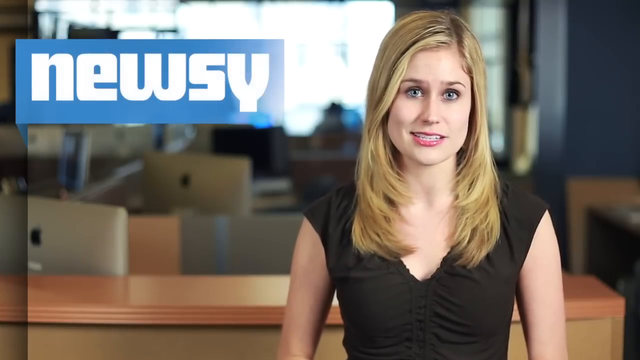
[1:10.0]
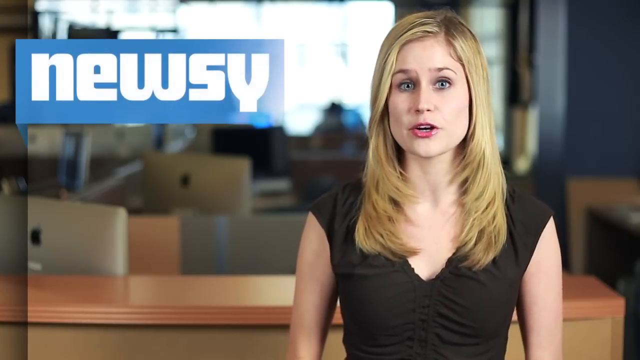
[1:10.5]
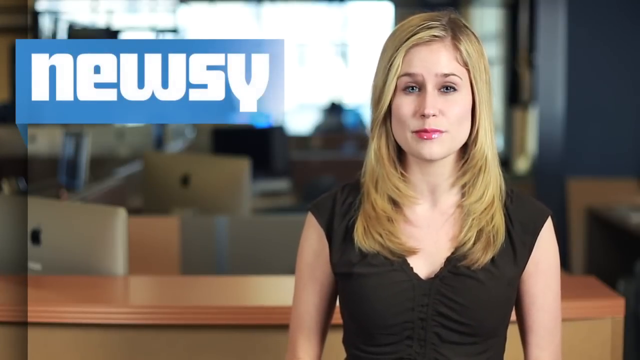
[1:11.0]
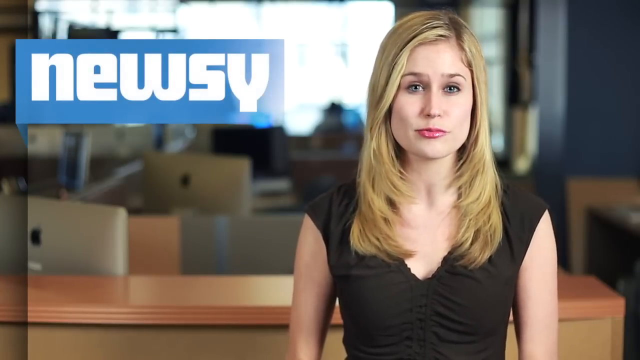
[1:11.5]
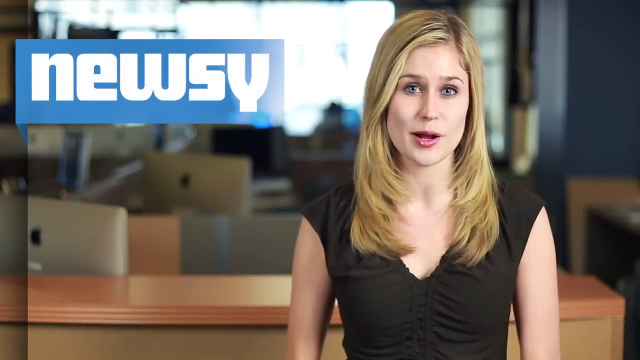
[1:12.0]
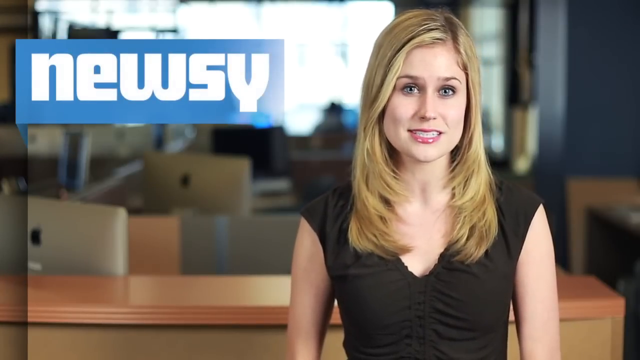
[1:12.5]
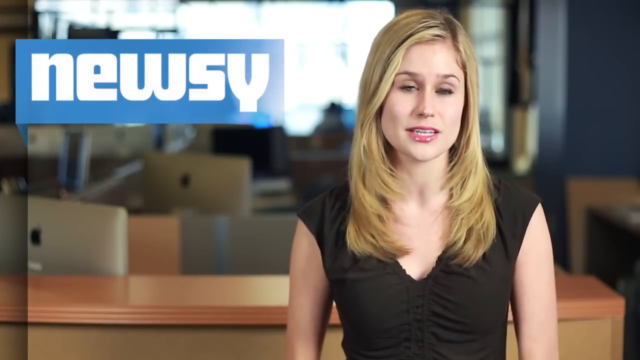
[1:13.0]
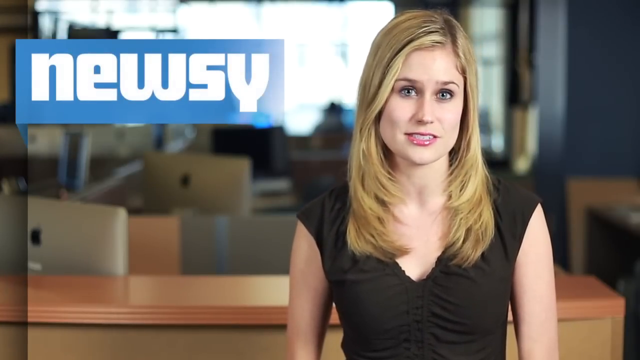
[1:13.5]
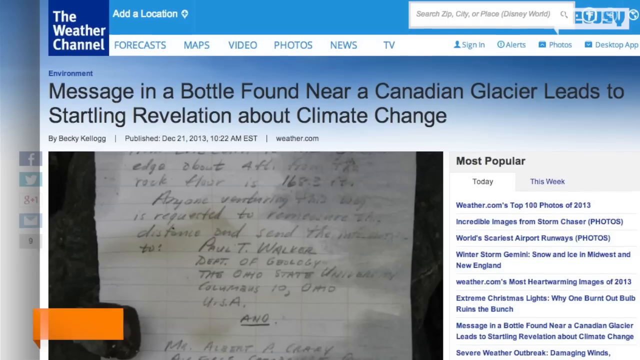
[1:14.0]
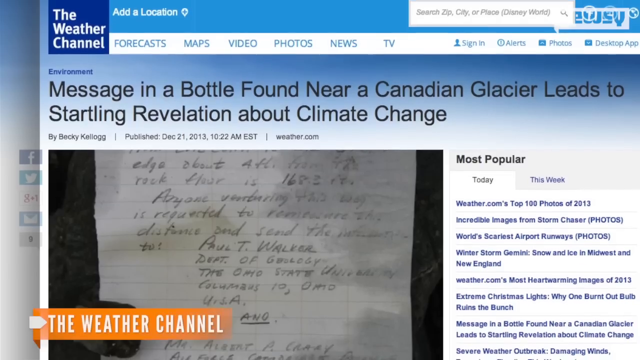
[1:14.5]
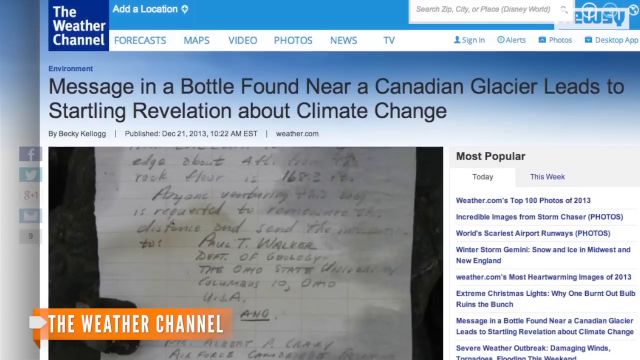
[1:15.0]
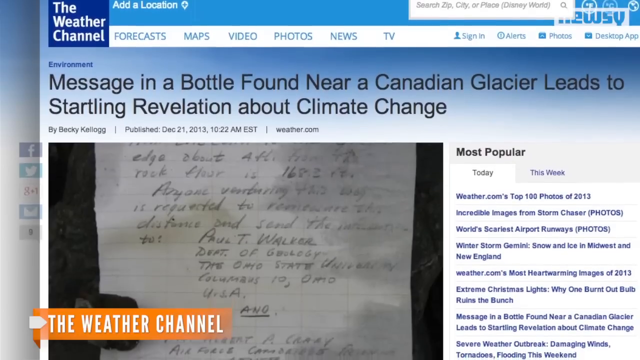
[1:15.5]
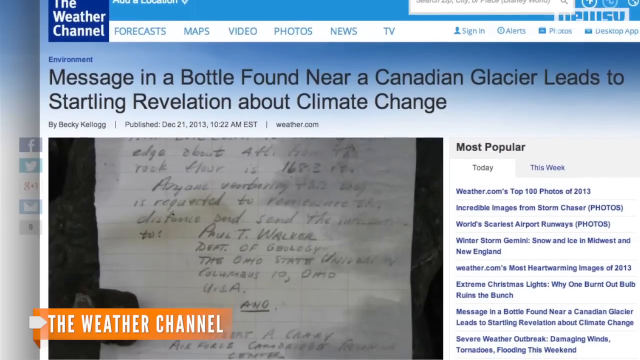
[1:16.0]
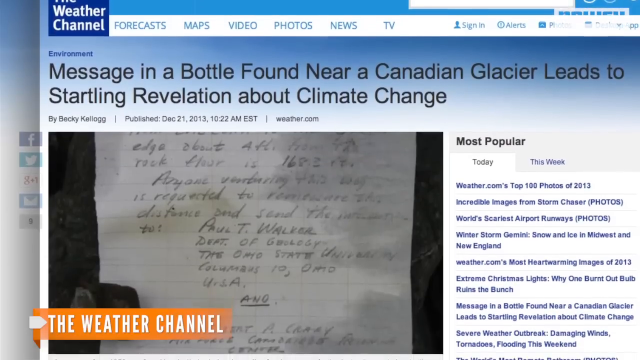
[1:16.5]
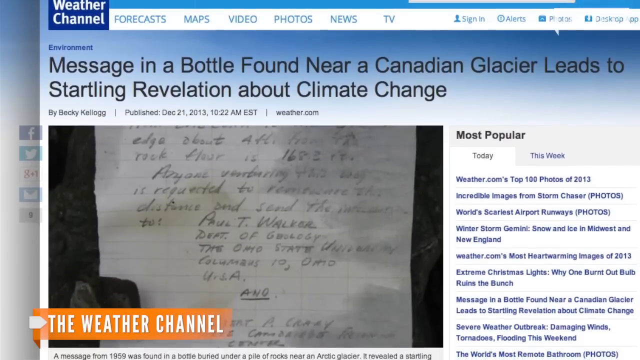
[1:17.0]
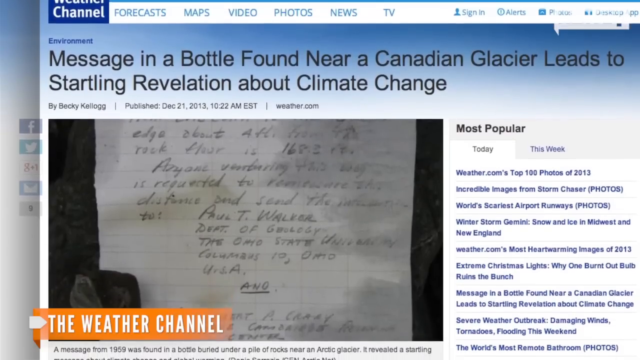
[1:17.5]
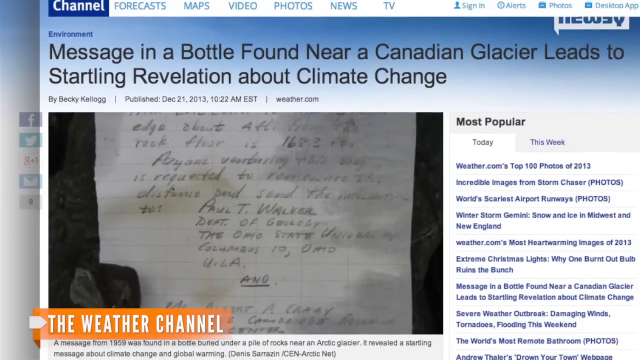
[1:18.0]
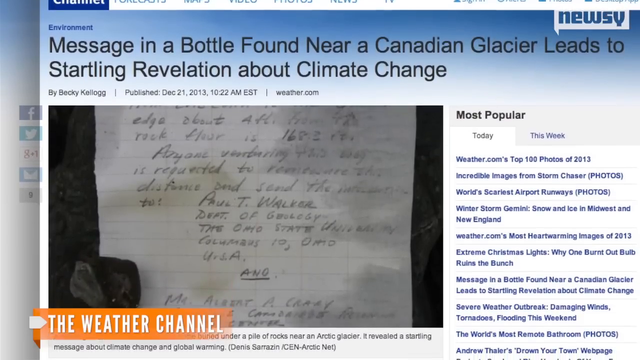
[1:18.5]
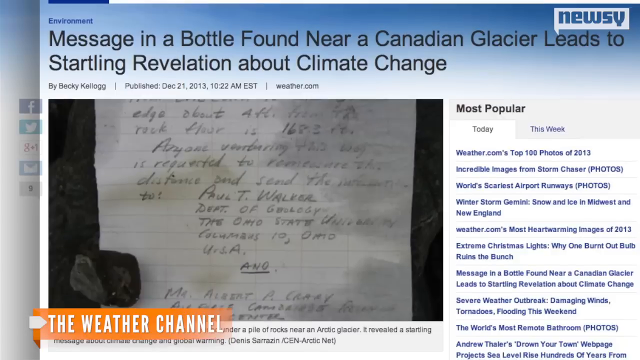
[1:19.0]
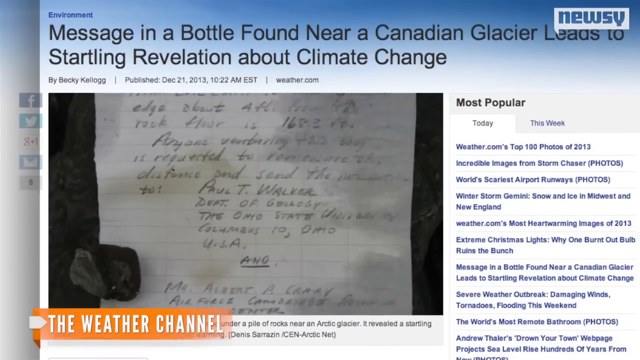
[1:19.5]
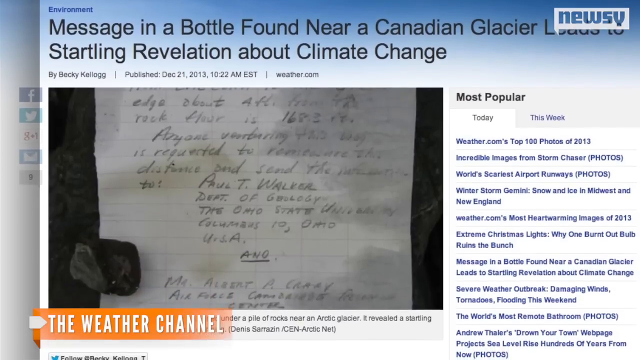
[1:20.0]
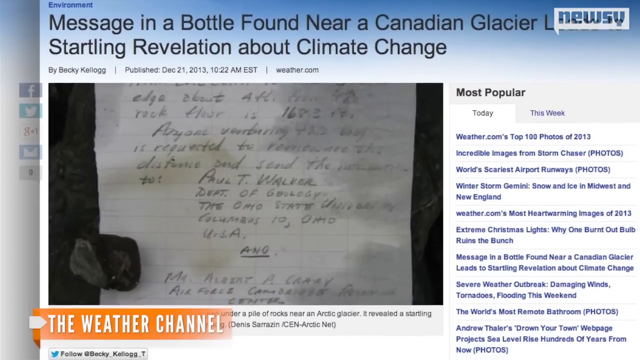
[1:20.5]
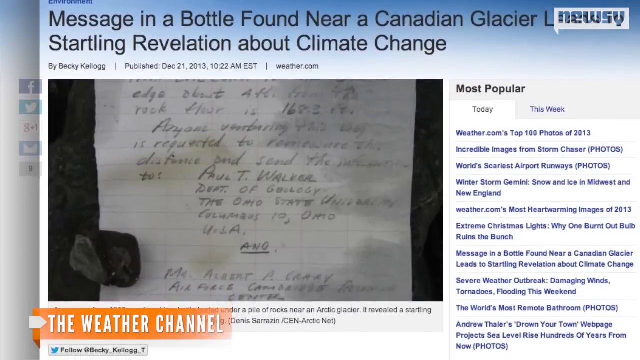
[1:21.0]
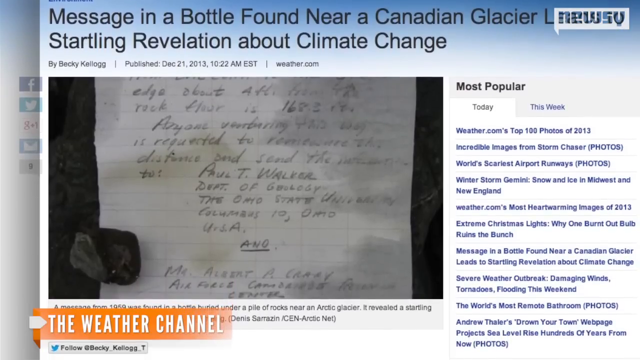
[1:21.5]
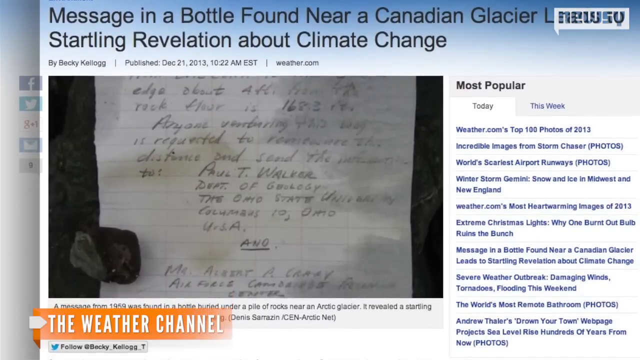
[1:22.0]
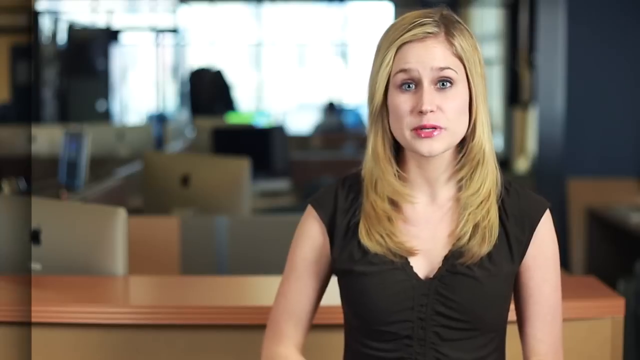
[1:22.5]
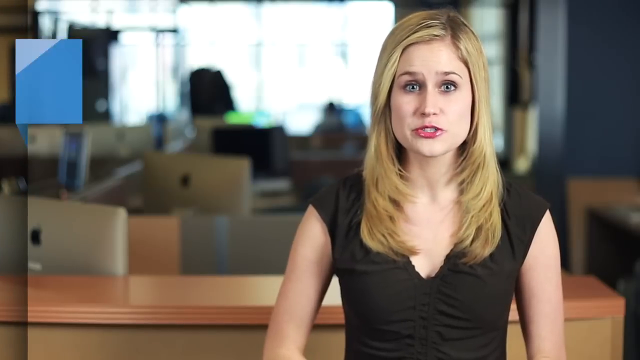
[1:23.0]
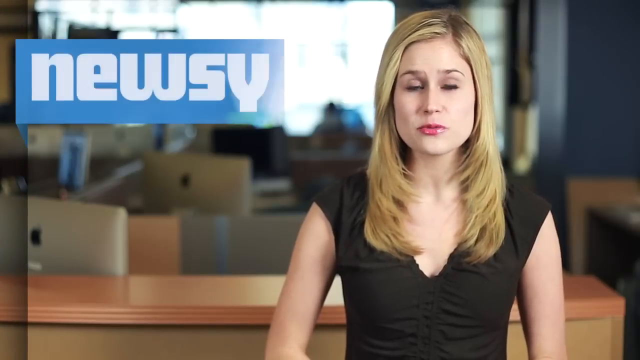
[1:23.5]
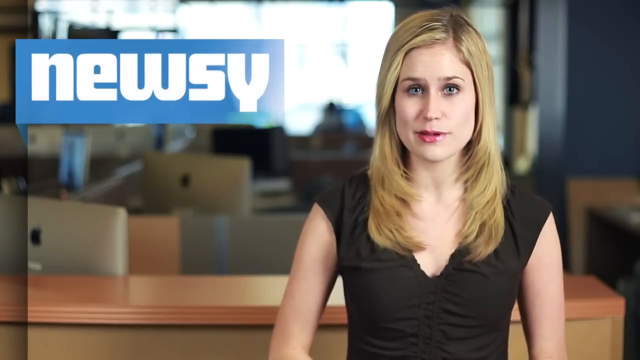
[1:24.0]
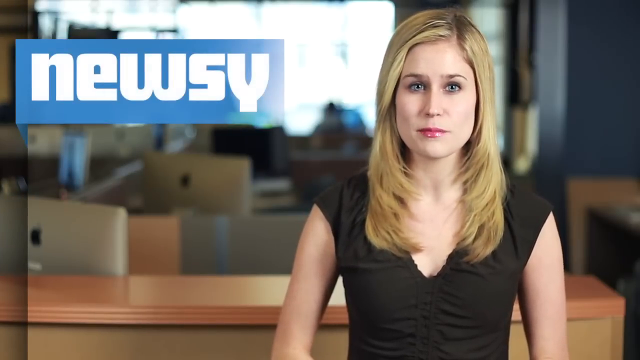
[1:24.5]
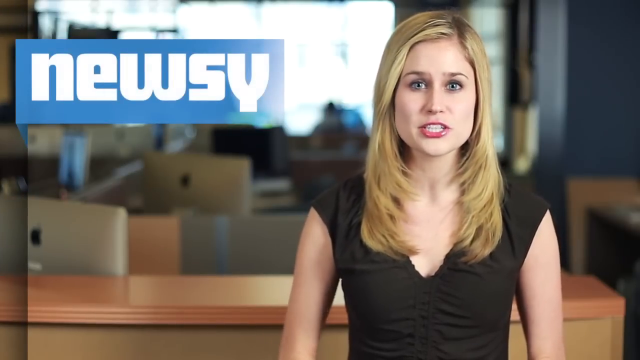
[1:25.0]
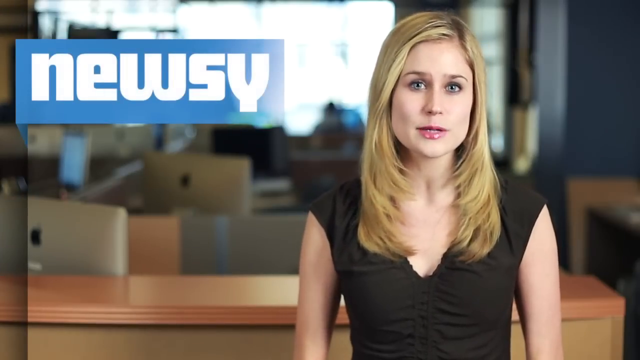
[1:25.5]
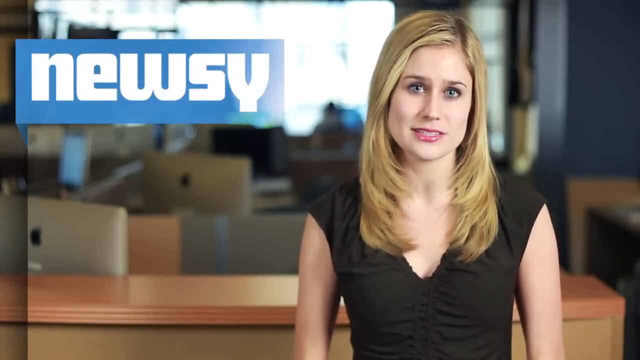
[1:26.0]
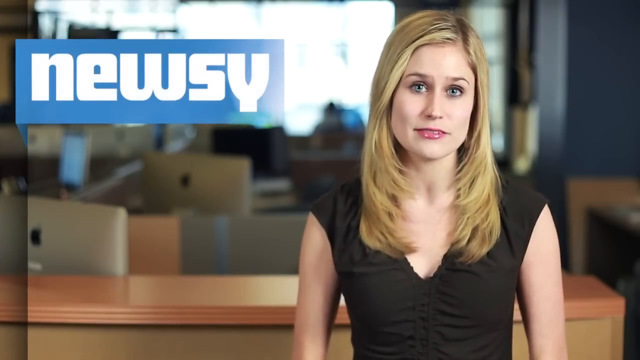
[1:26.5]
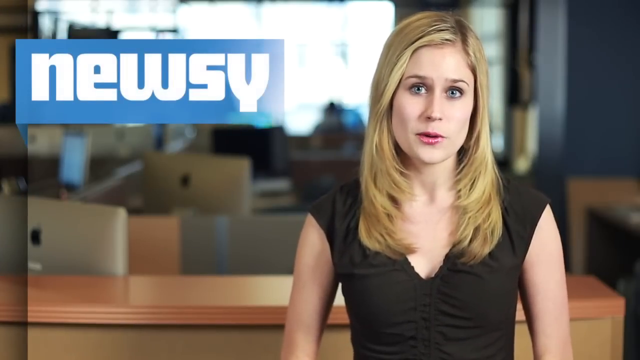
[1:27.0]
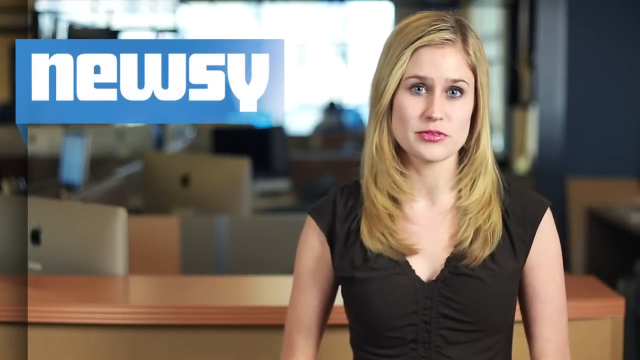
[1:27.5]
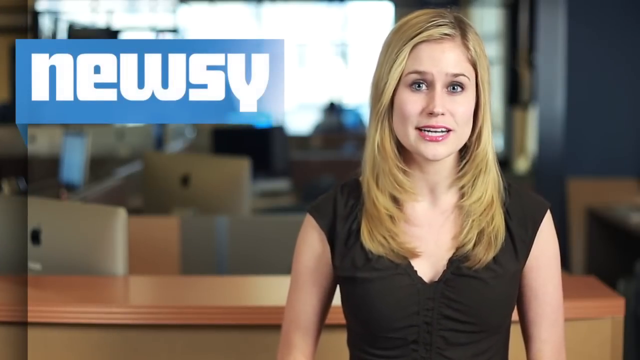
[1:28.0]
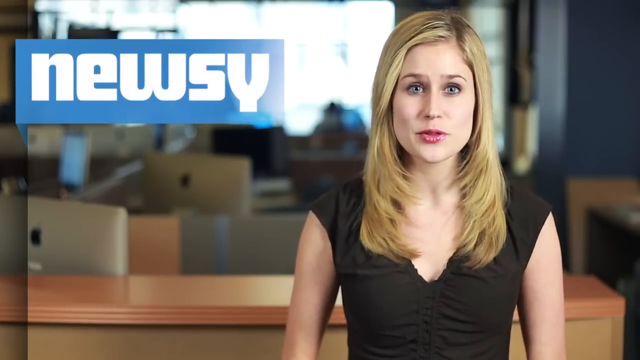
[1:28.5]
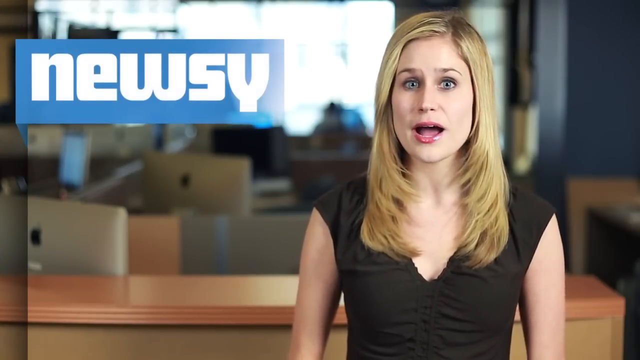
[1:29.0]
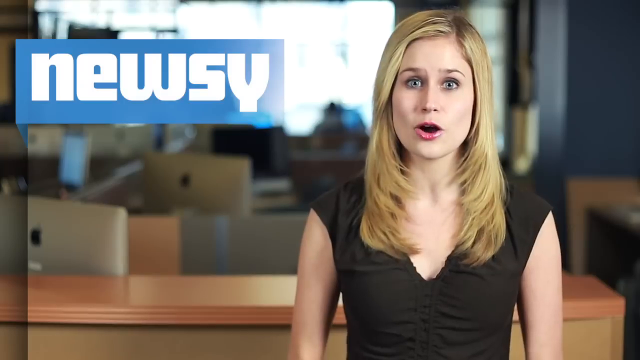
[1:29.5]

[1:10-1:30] The news reporter continues to speak and narrows her eyes at one point. The screen then changes to the Weather Channel website, with the headline "message in a bottle found near a Canadian glacier leads to startling revelation about climate change." There is a photo of part of the letter; the writing is faint but legible, and the letter is held down by a rock in the bottom left corner. The camera scrolls down the screen slowly. On the right-hand side is "most popular" with various headlines underneath, a "today" tab and another tab for "this week." The reporter is then shown again in the newsroom, now with a slight smile on her face.